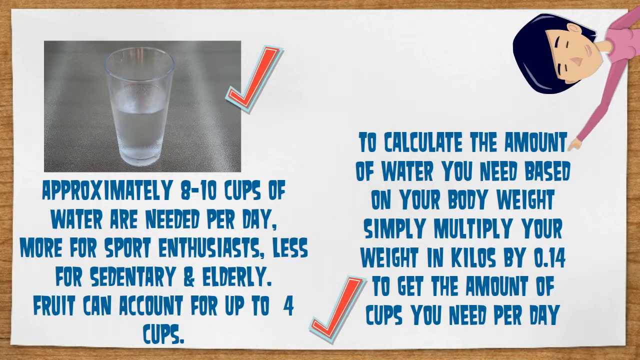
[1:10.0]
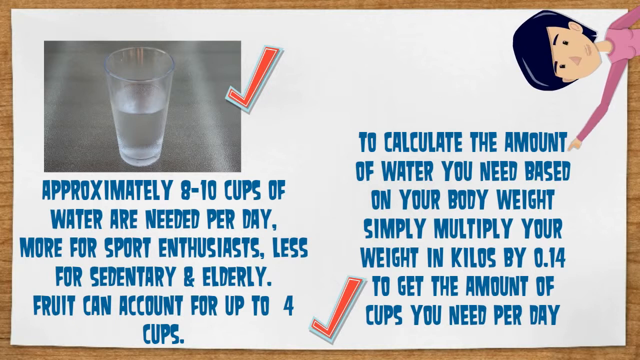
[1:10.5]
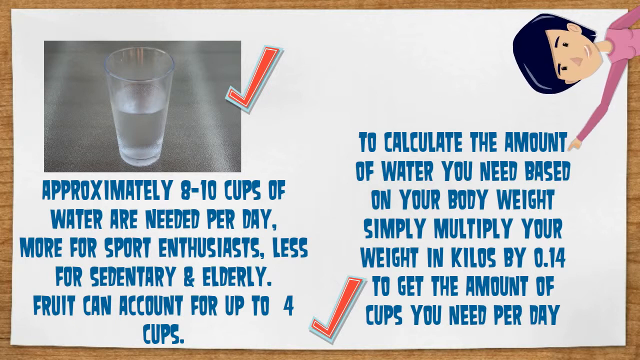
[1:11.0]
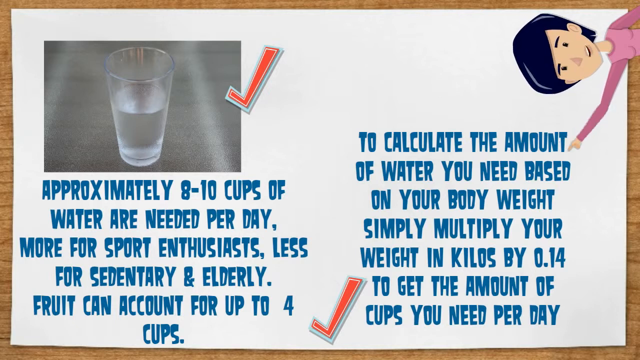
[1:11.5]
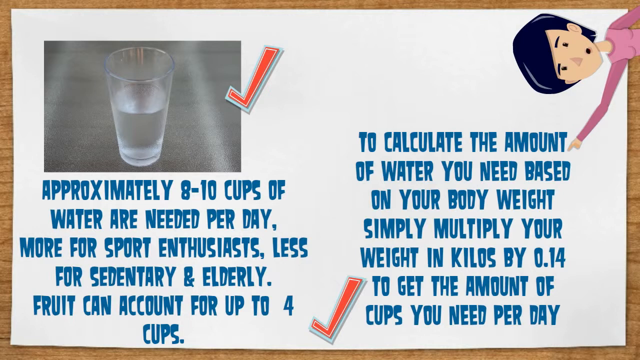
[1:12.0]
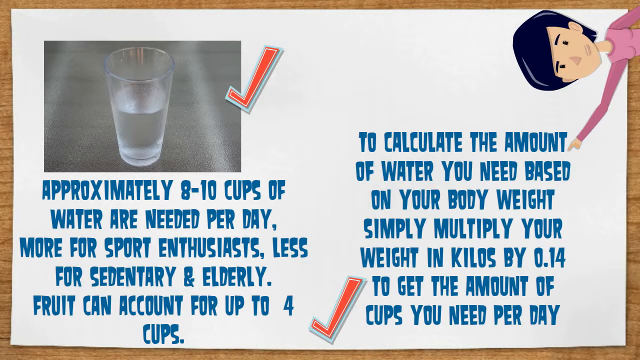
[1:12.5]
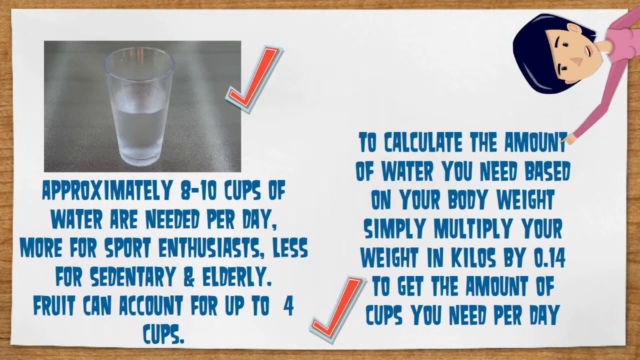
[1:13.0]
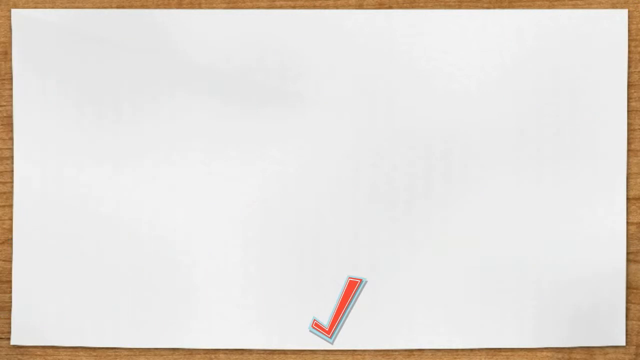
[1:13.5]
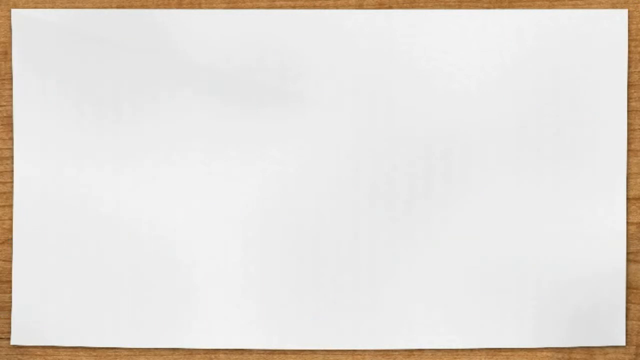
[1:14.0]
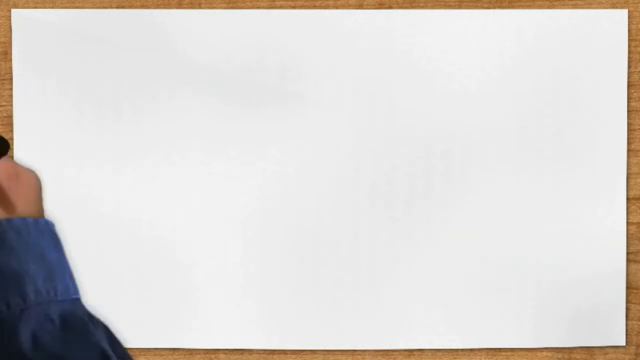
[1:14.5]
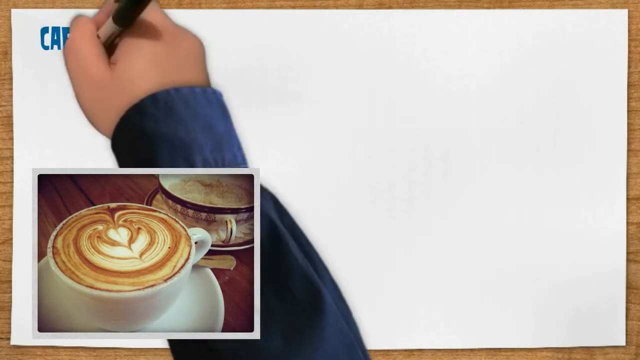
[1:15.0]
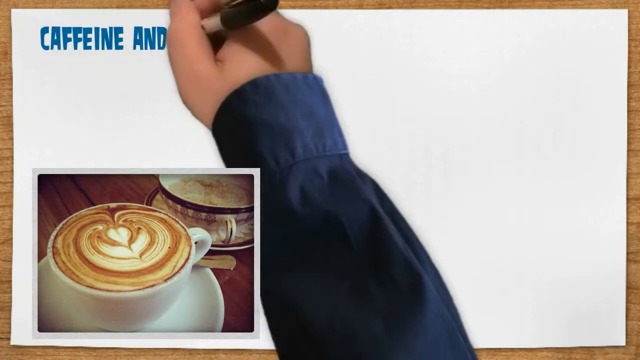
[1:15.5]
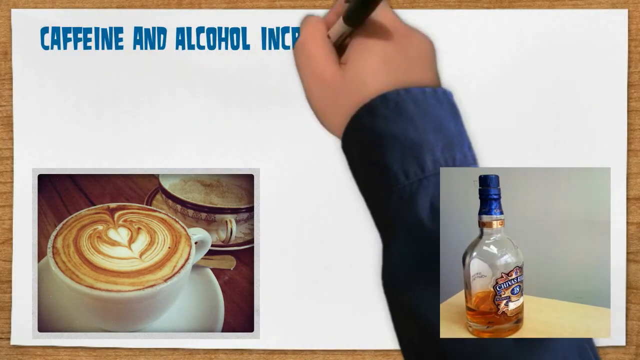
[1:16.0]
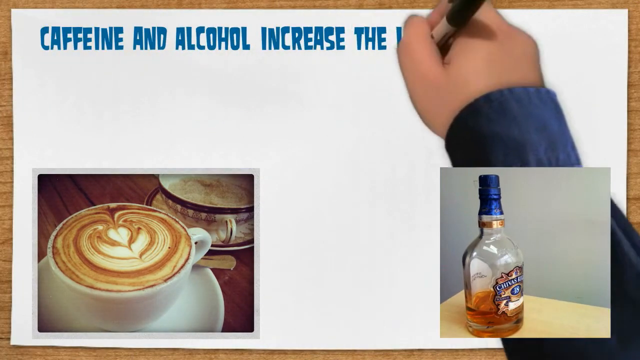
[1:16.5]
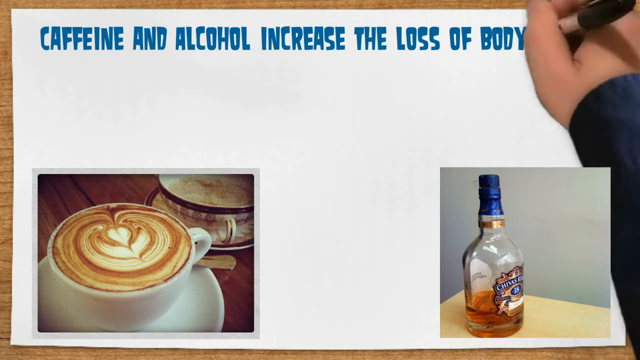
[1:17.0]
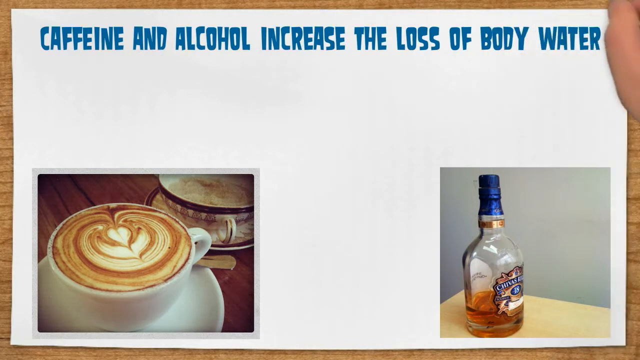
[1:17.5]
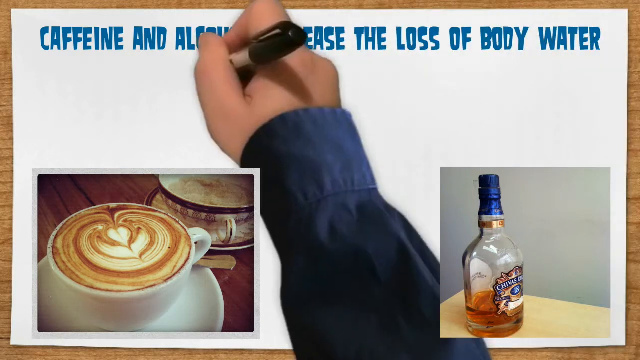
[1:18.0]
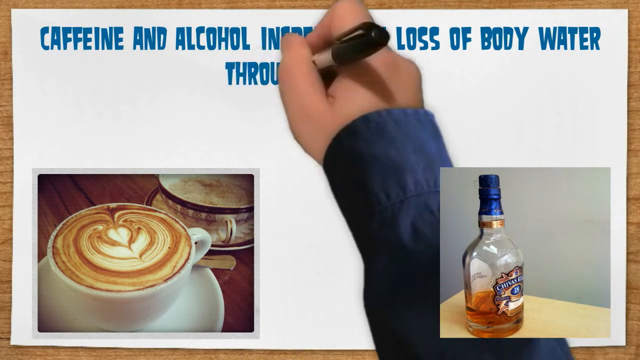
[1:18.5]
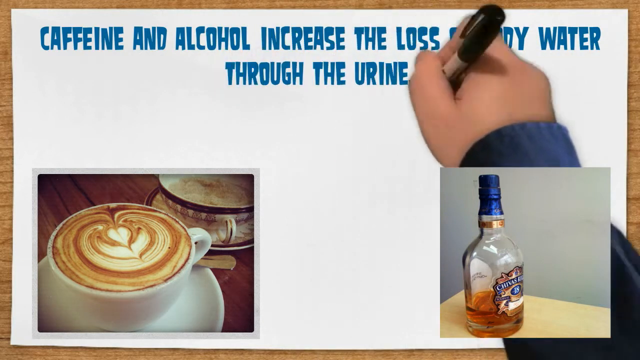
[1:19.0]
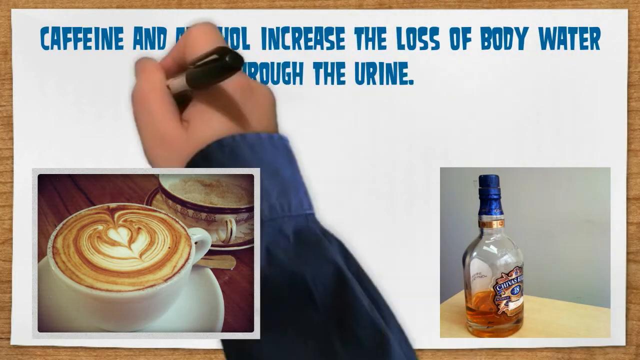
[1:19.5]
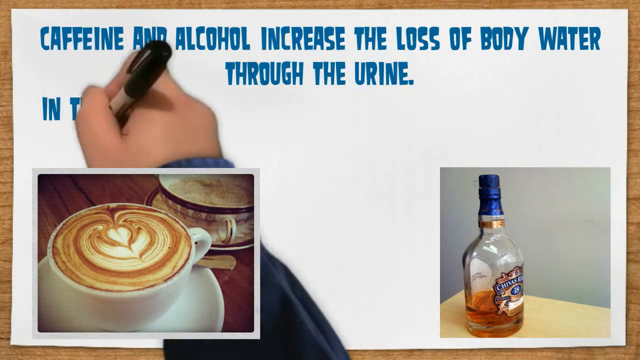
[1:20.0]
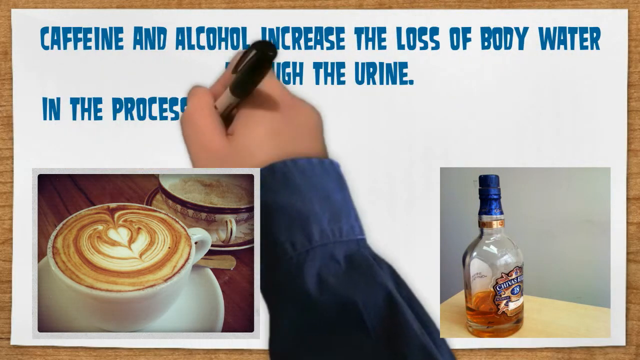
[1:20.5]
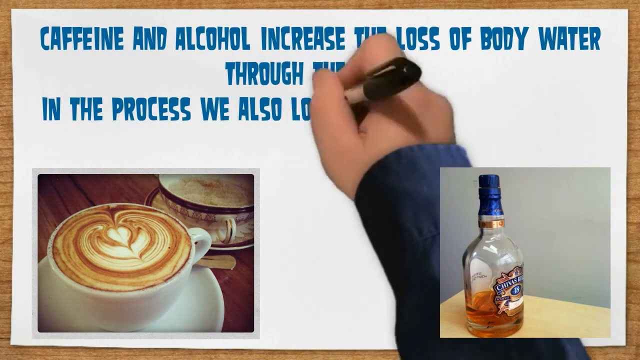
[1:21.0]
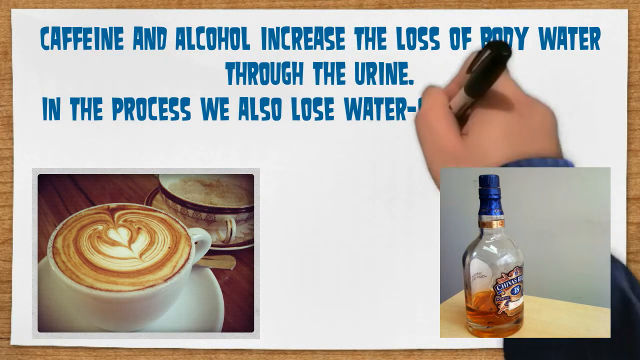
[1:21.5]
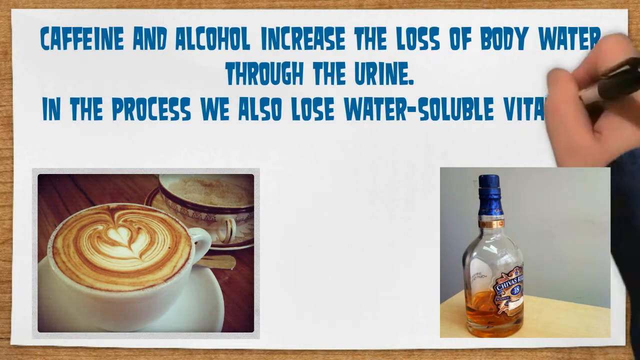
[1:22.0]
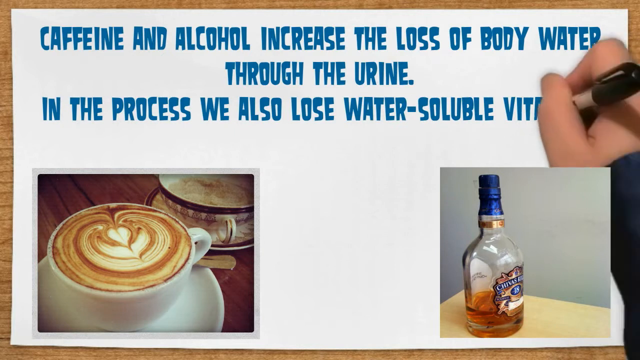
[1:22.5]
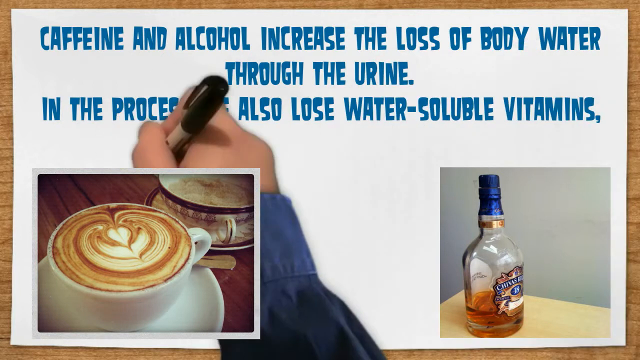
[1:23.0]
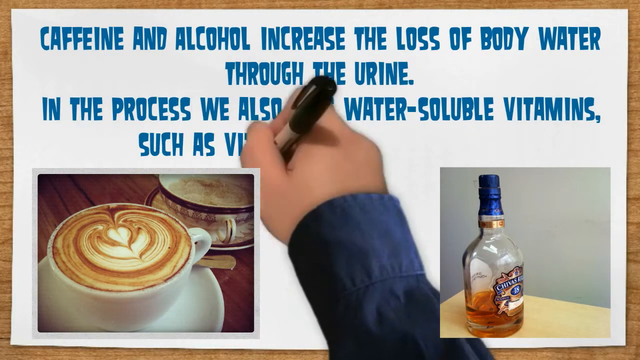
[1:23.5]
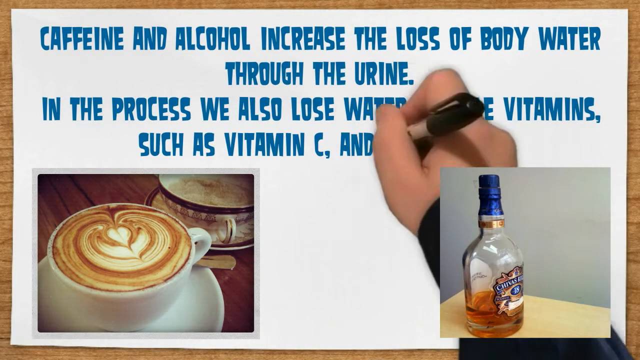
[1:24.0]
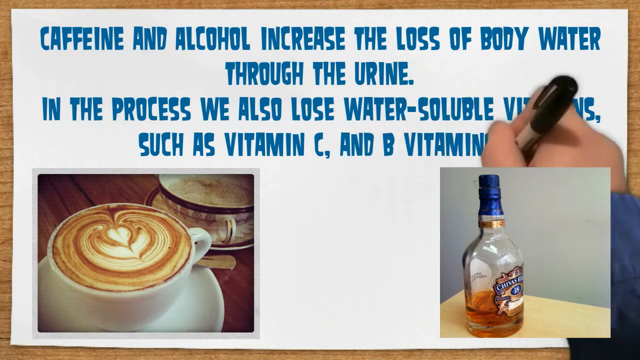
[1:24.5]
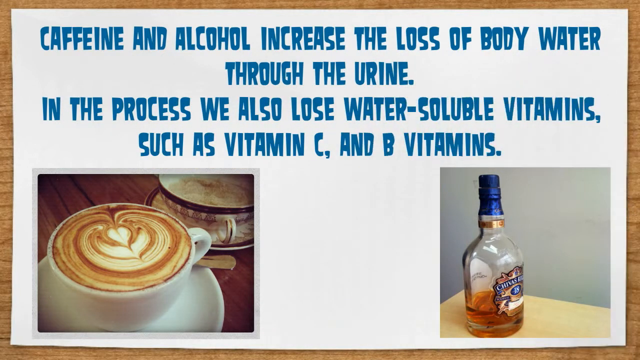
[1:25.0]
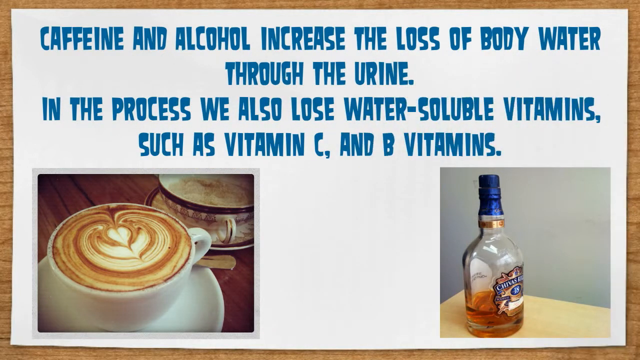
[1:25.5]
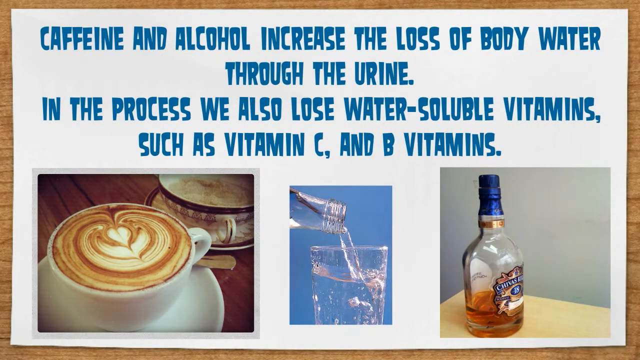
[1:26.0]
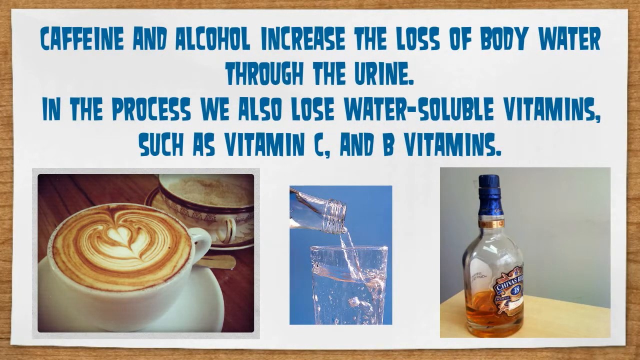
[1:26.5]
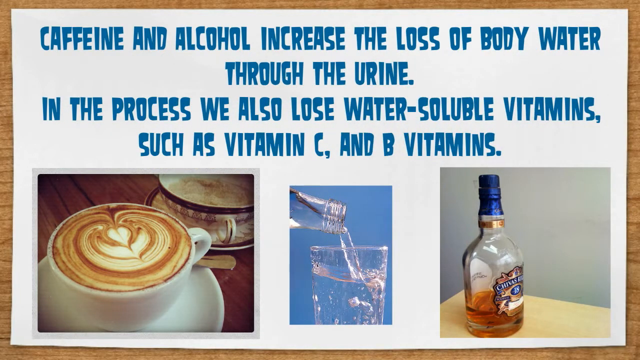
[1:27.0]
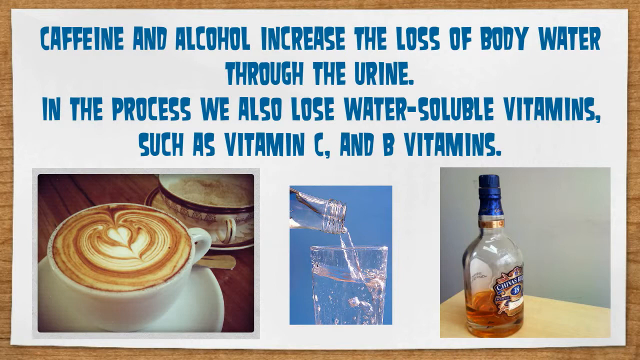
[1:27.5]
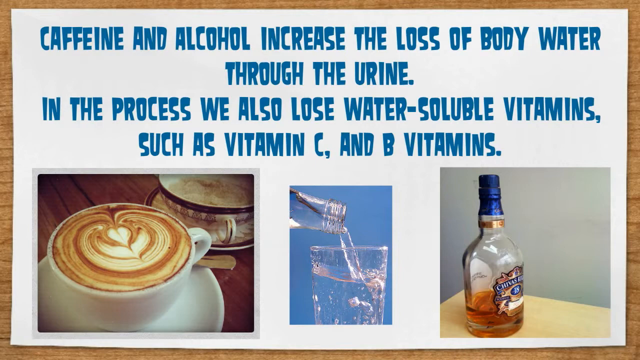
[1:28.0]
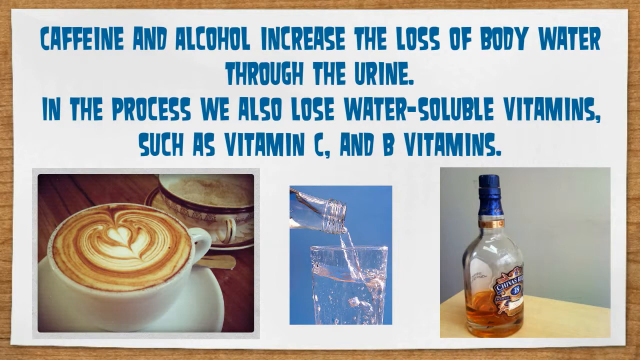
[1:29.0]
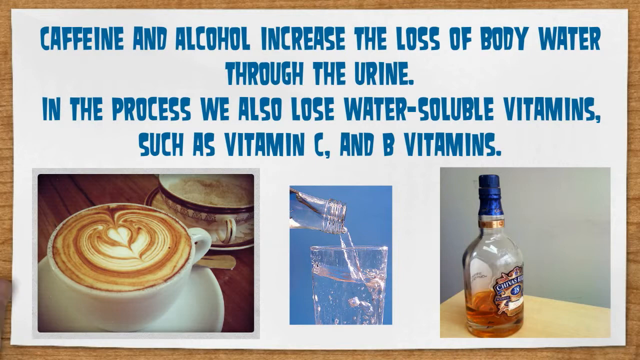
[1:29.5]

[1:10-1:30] A red tick is at the bottom left of this fact, and the woman continues moving her arm and talking. Everything is then removed: the left image and fact sweep off to the left of the screen, the right image and fact sweep off to the right, and the red tick remains at the bottom center before suddenly vanishing. The hand reappears, pretending to write the text, and a picture of a cappuccino appears at the bottom left, overlaid on top of the hand. The text the hand writes reads "caffeine and alcohol increase the loss of body water through the urine." A picture of a glass of alcohol appears at the bottom right. The hand continues writing: "in the process we also lose water soluble vitamins such as vitamin c and b vitamins." An image of a glass of water being poured from a glass bottle appears in the center of the screen. The hand disappears off the screen to the right, and the image stays for a few seconds, leaving the text readable.